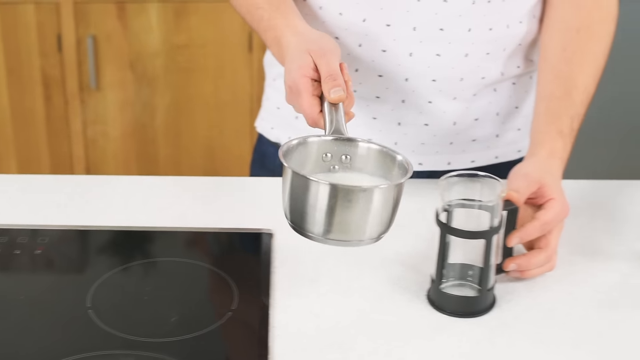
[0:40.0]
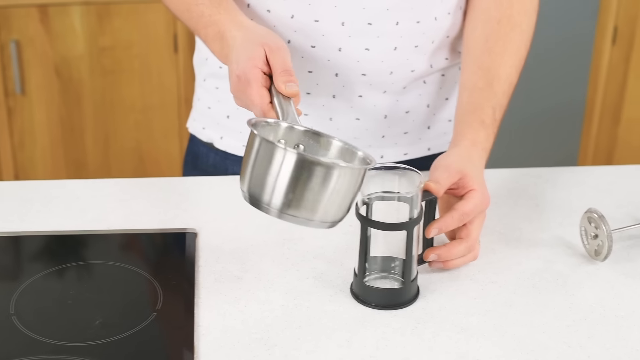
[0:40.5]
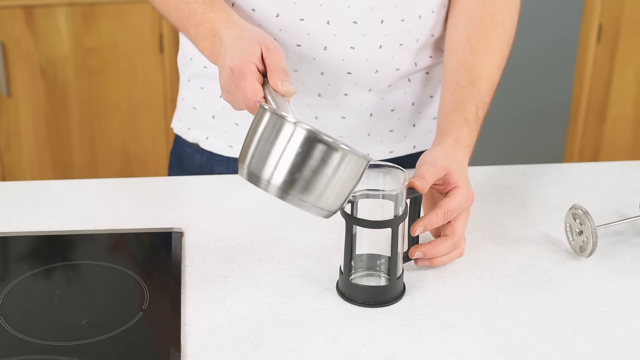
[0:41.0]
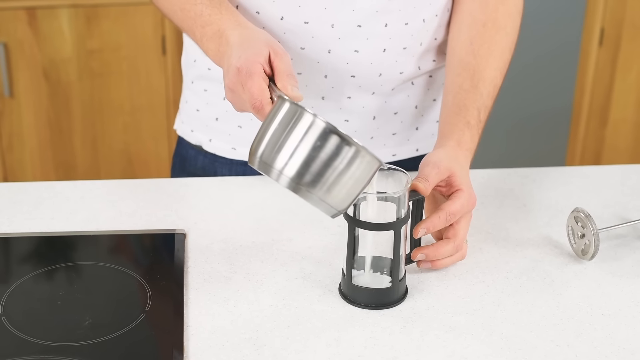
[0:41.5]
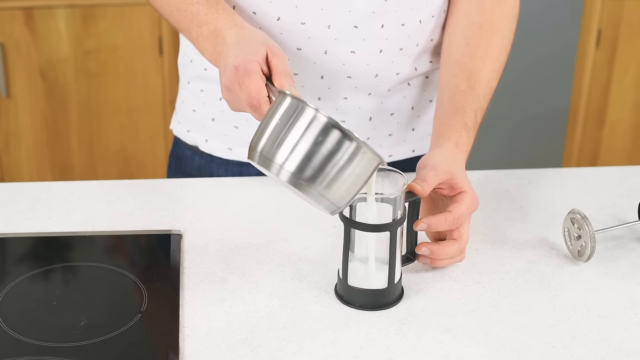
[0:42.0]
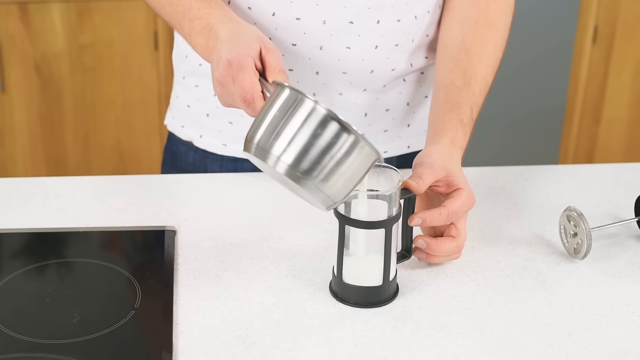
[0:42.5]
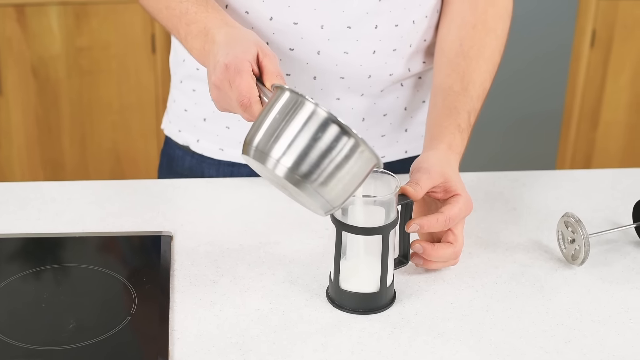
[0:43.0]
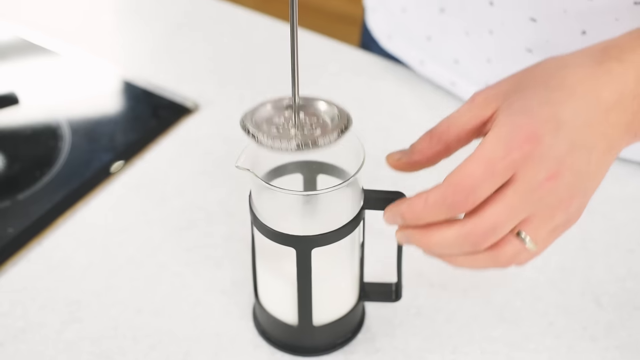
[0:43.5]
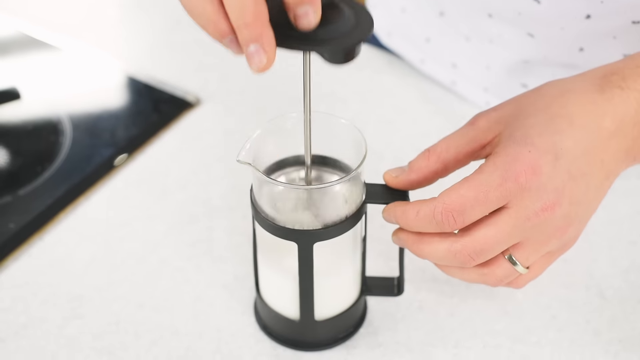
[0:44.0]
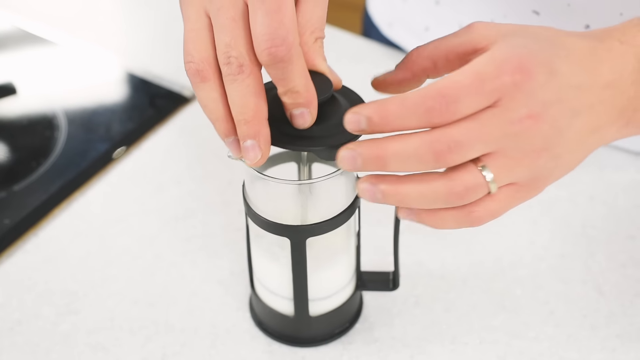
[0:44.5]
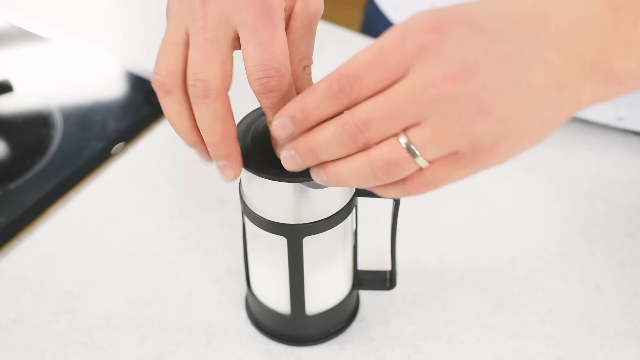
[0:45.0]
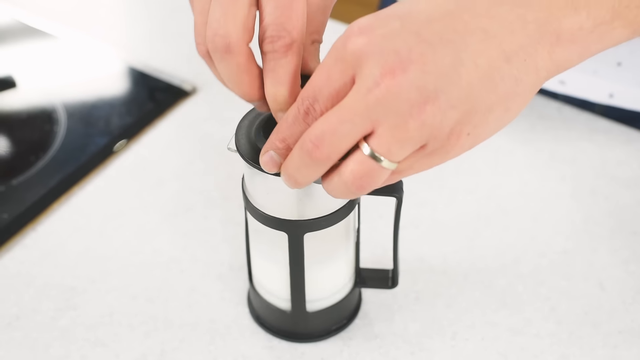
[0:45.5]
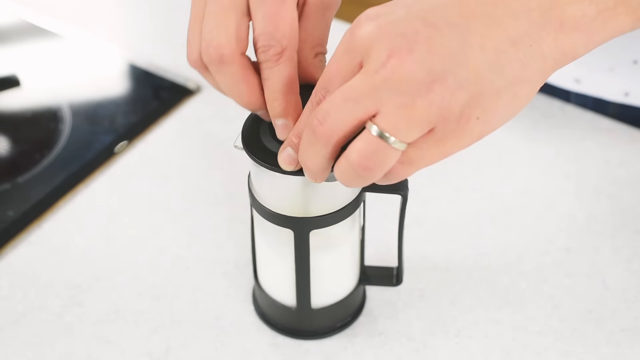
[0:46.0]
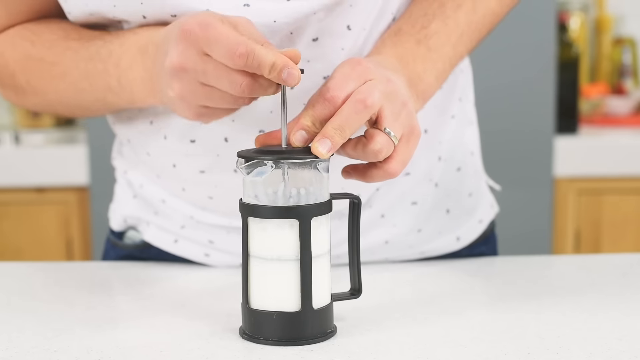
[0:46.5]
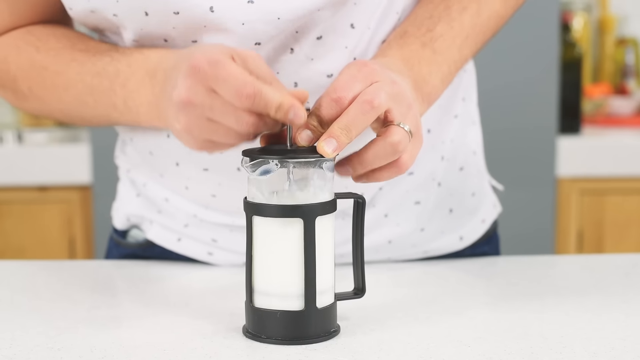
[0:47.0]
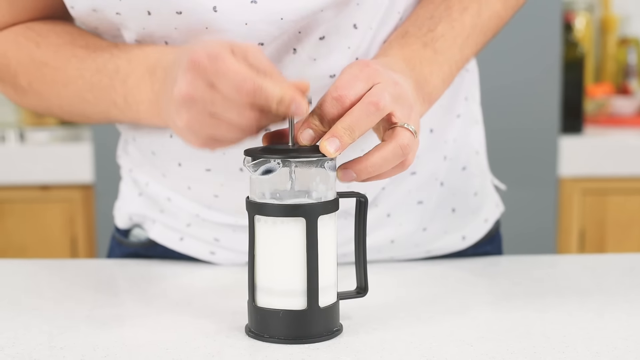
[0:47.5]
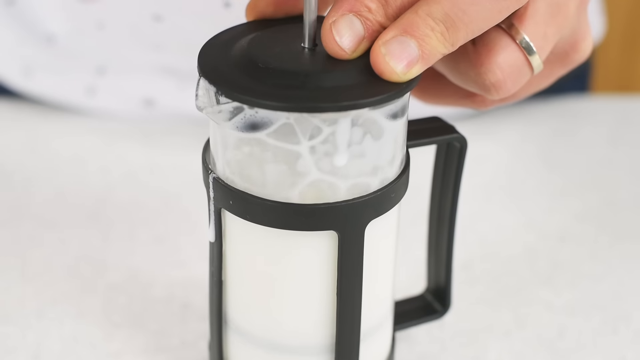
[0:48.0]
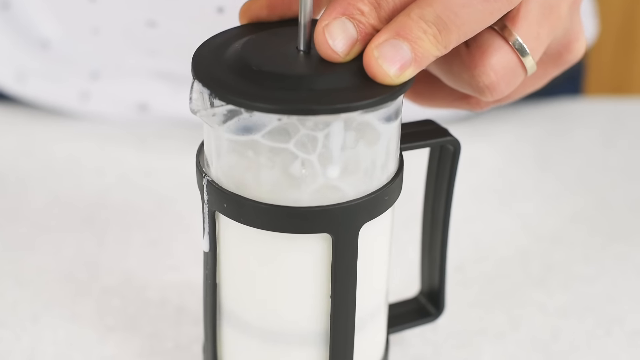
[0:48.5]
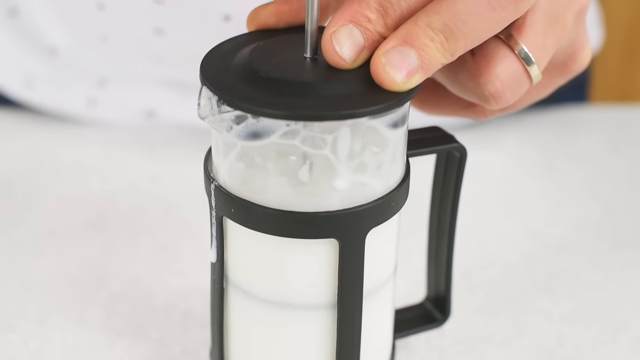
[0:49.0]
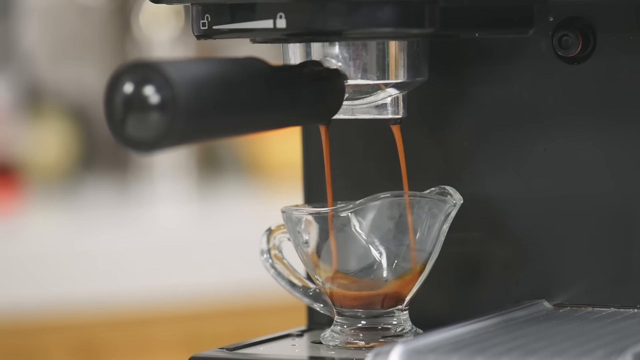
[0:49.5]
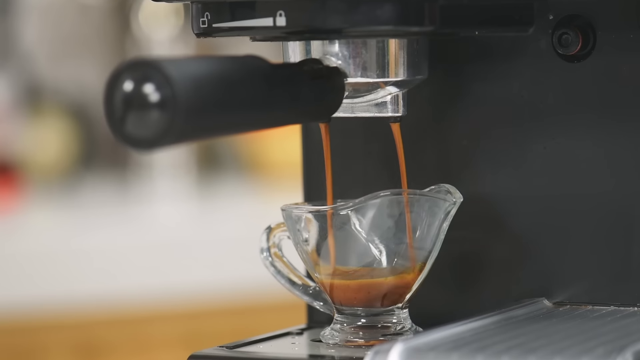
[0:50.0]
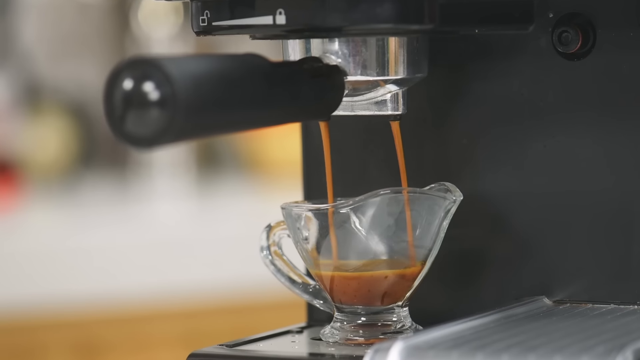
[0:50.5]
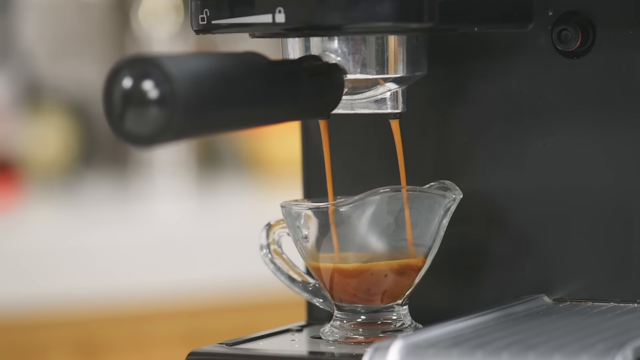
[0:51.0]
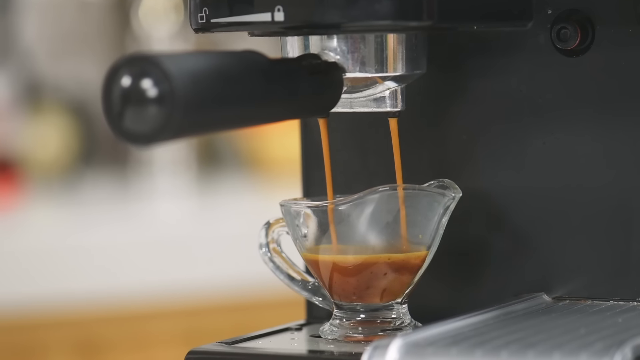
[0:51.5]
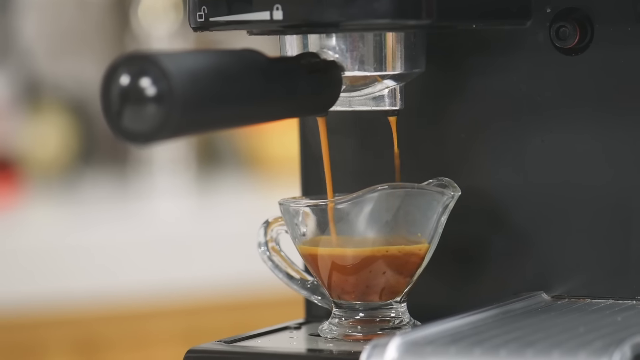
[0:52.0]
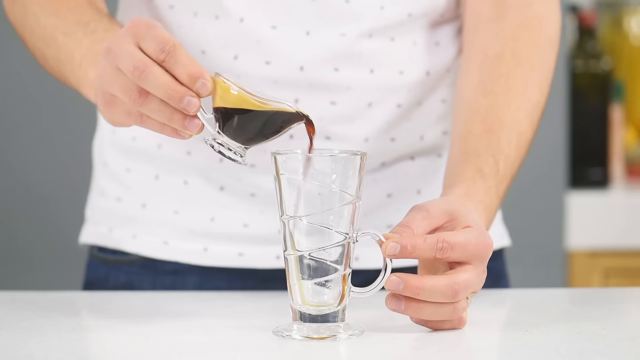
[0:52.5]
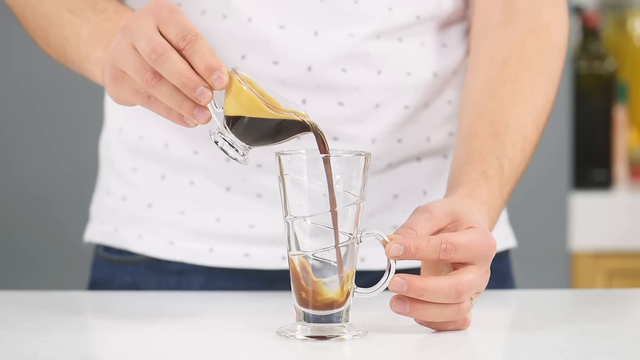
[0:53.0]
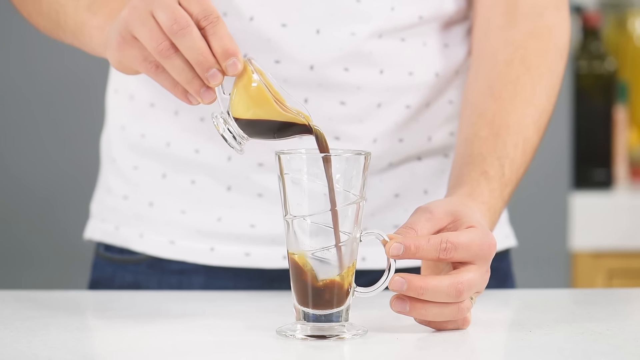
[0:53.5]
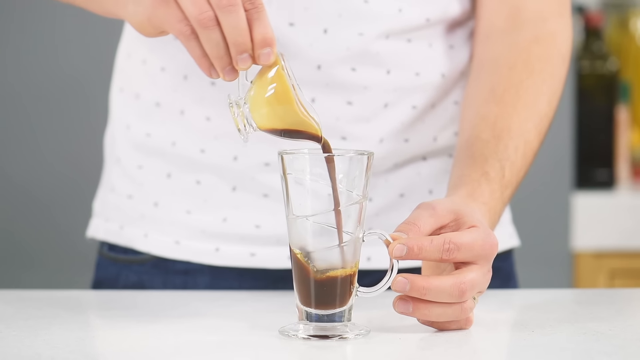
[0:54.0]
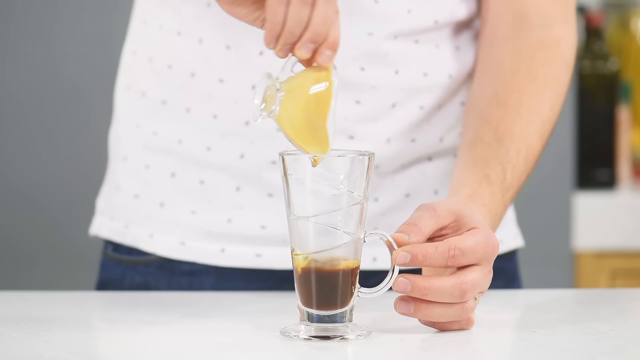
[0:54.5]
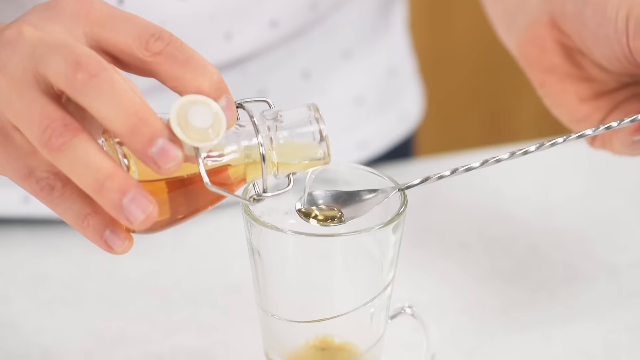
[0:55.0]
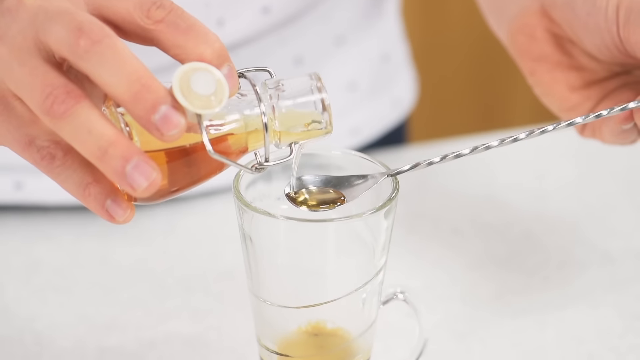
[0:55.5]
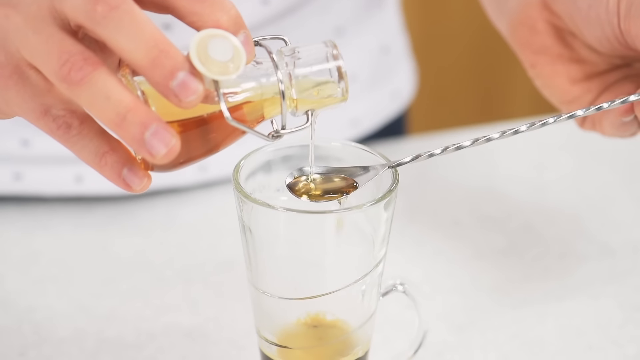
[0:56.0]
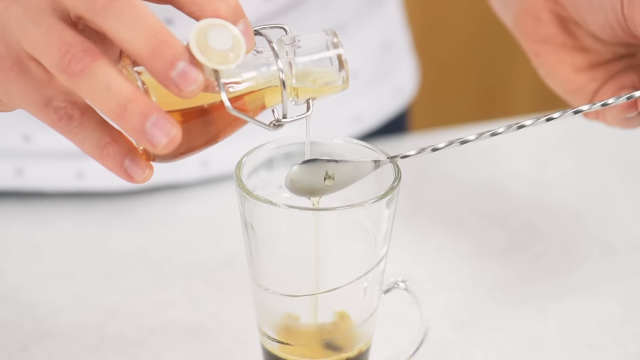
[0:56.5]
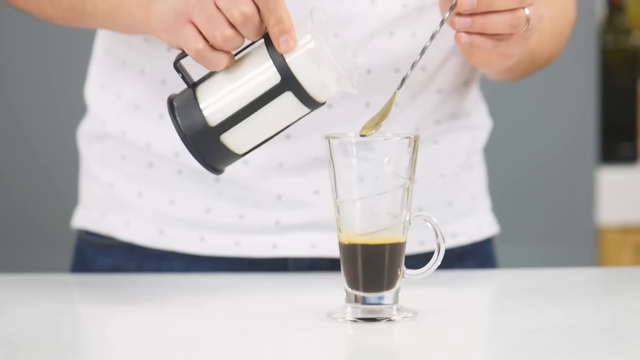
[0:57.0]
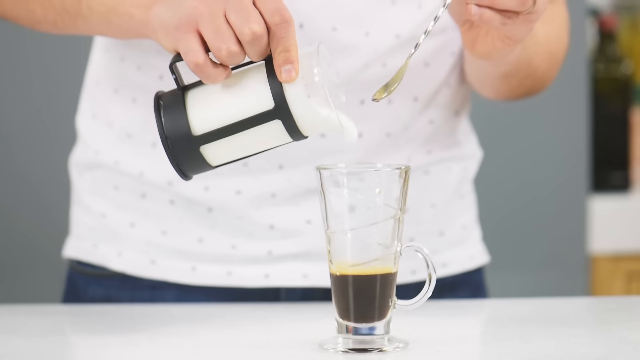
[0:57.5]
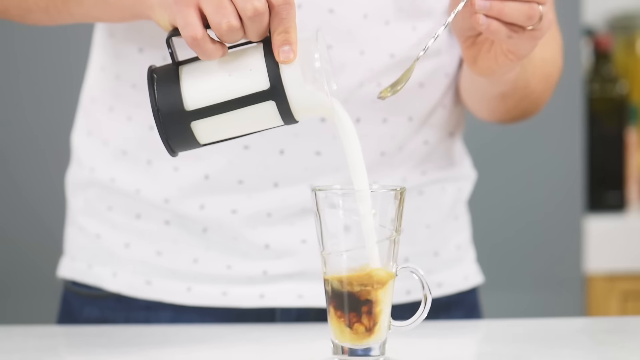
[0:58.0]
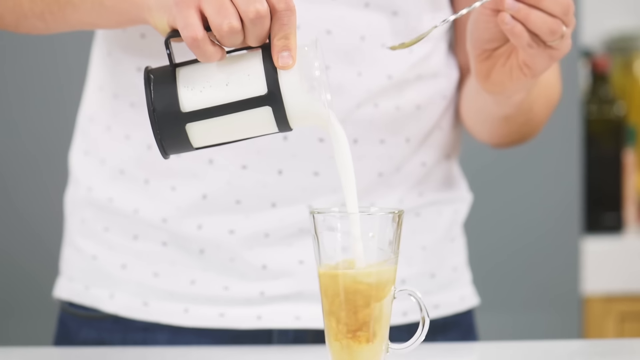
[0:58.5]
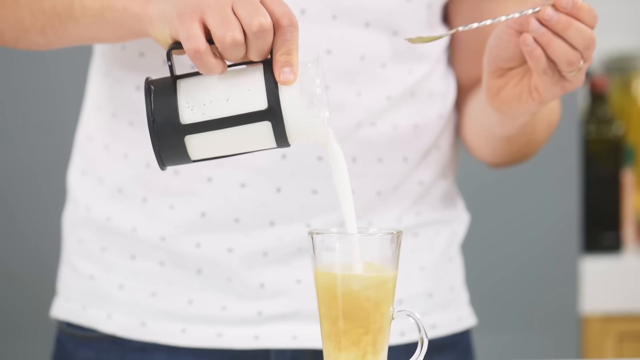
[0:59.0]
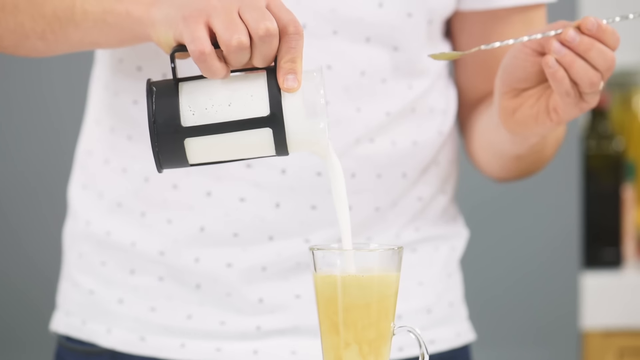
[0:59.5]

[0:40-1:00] Someone prepares a latte. A man's hands hold a frothing pitcher resting on a kitchen counter while his right hand holds a small stainless steel pot and pours milk into the pitcher. He places the milk frother into the pitcher and pumps the top up and down several times with his right hand. A close-up shows a coffee maker with two streams of coffee dripping into a glass pitcher with a handle, and he pours this coffee into a large glass latte cup. His hands then hold a silver spoon with a long handle over the latte cup as he pours a liquid from a small glass bottle onto the spoon, then turns the spoon to drop the liquid into the cup. Finally, he pours the milk from the frother into the latte cup.